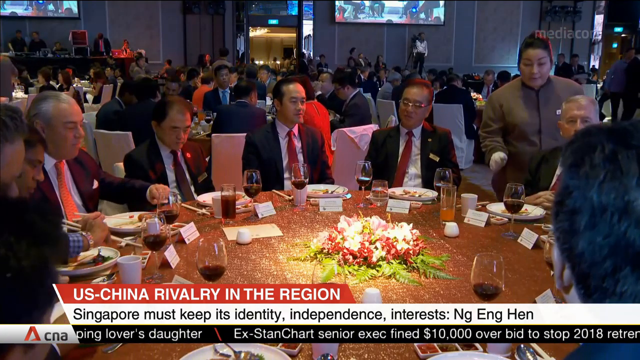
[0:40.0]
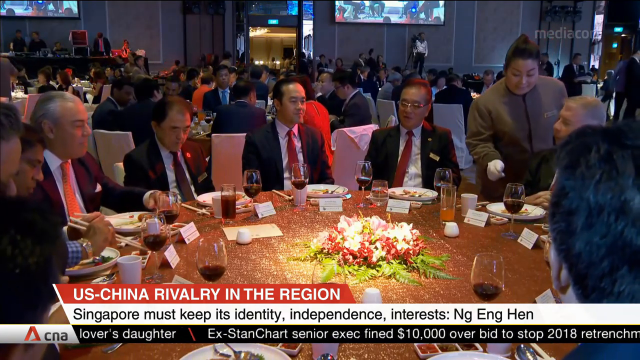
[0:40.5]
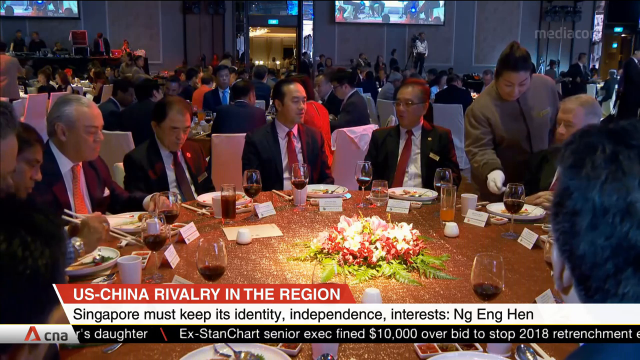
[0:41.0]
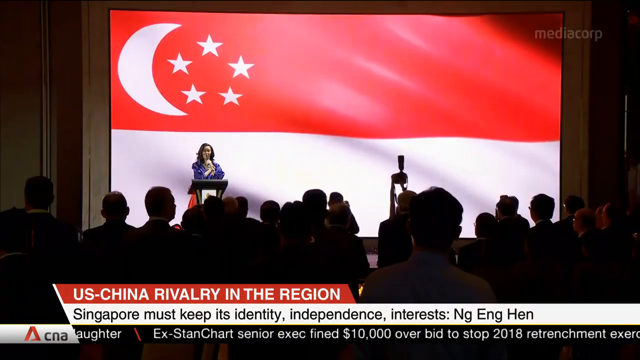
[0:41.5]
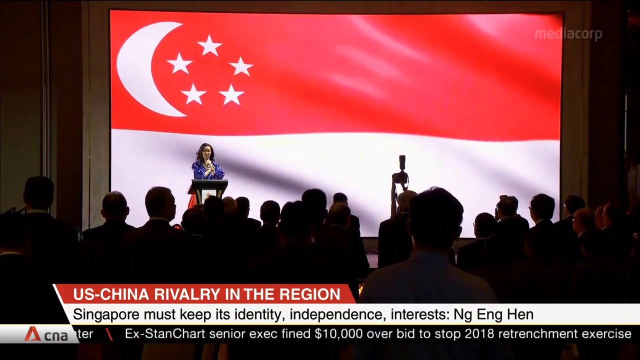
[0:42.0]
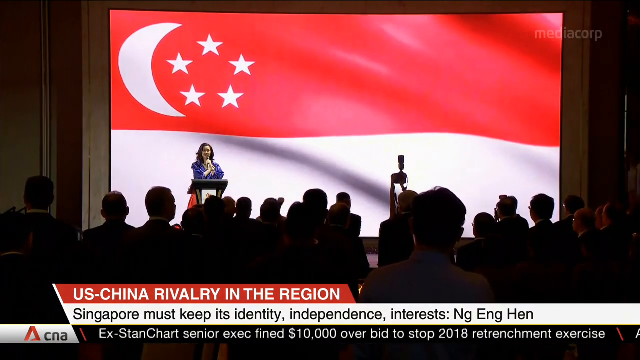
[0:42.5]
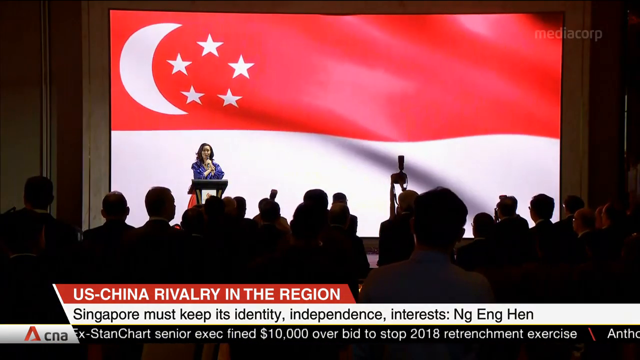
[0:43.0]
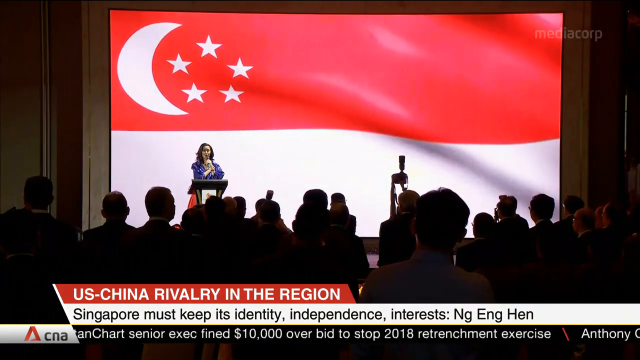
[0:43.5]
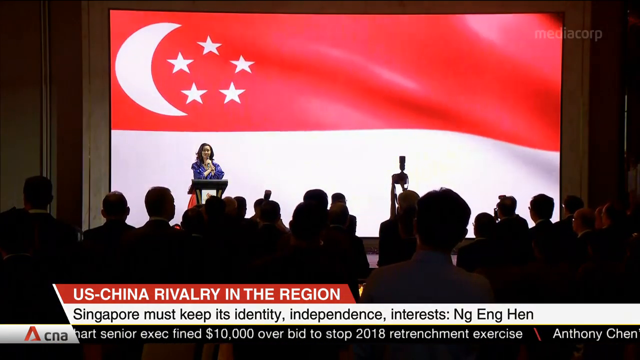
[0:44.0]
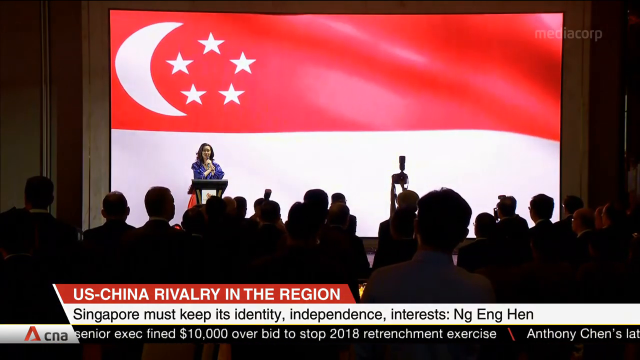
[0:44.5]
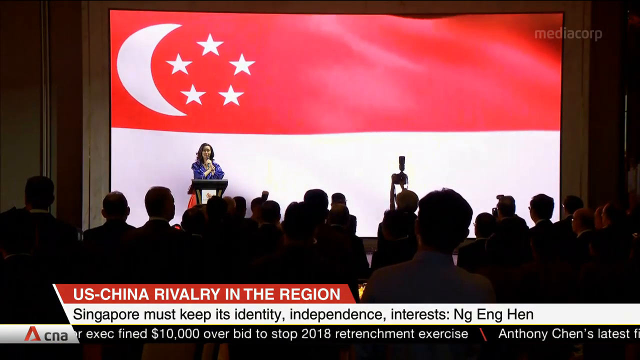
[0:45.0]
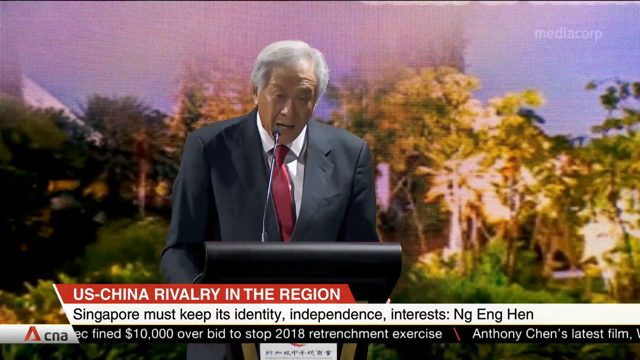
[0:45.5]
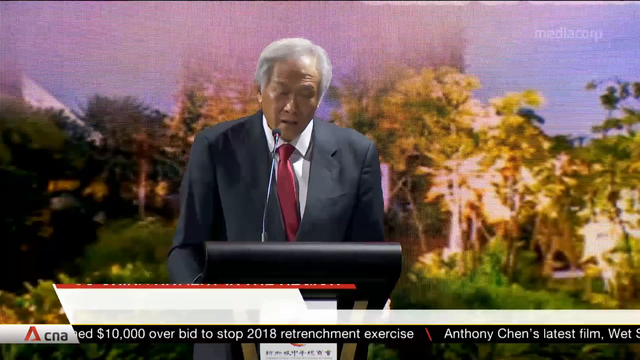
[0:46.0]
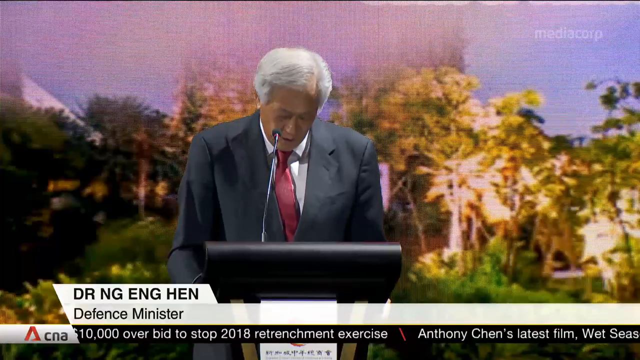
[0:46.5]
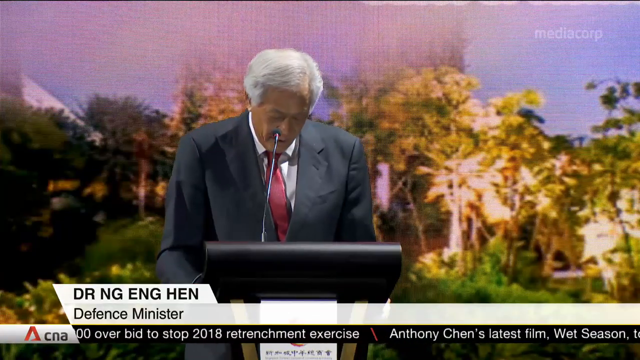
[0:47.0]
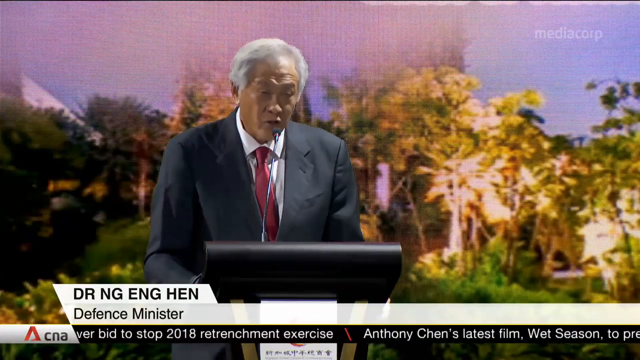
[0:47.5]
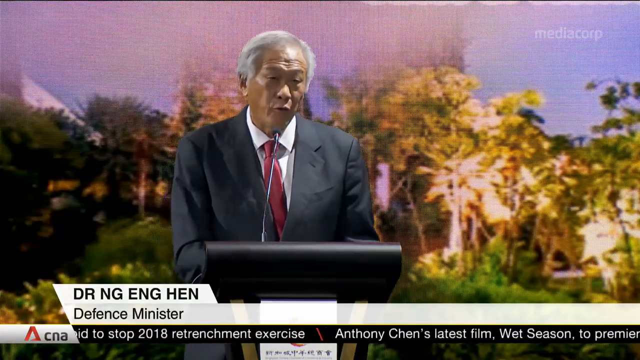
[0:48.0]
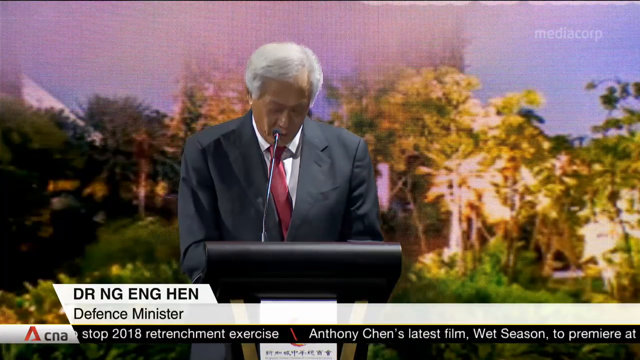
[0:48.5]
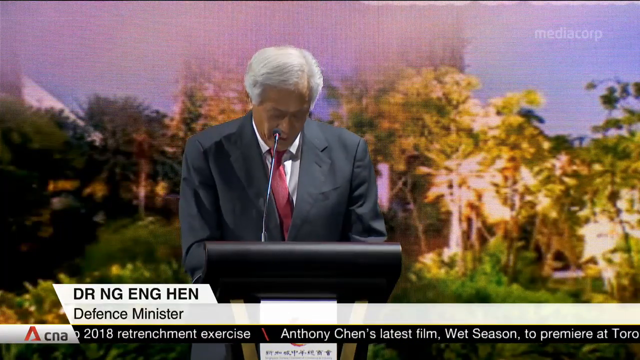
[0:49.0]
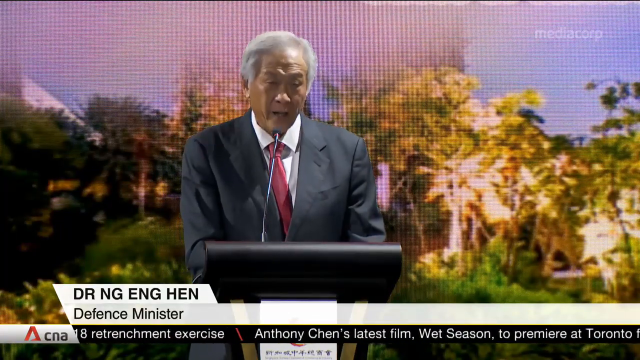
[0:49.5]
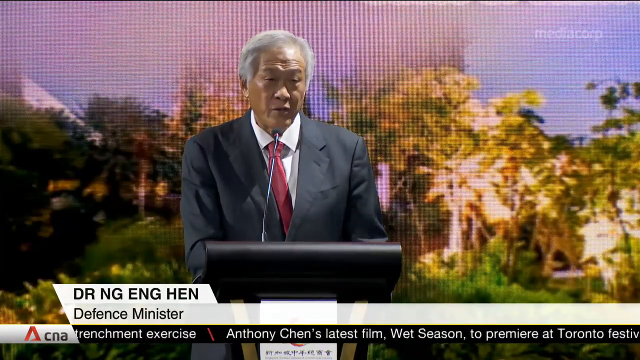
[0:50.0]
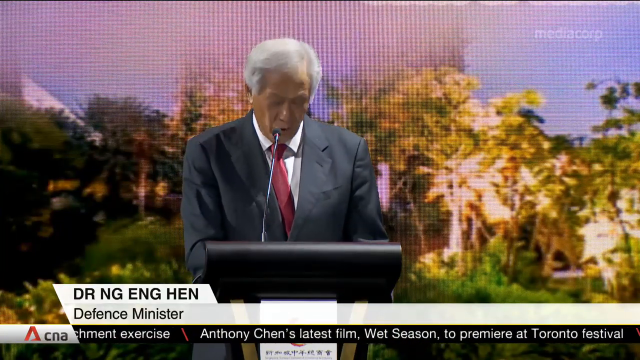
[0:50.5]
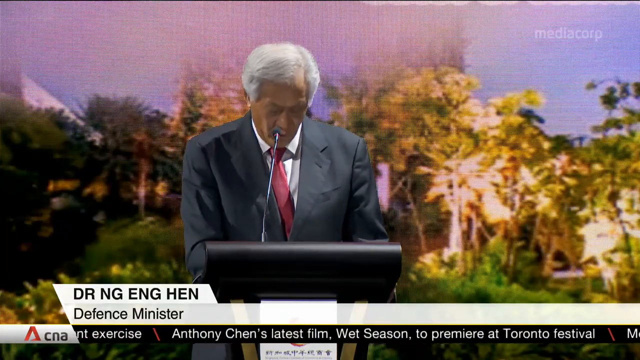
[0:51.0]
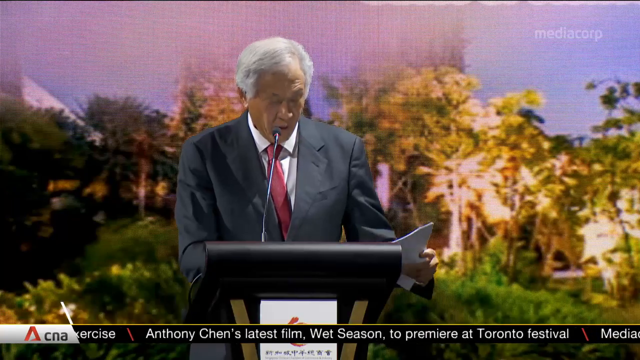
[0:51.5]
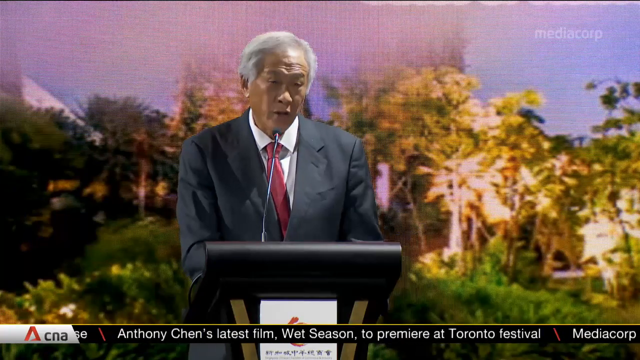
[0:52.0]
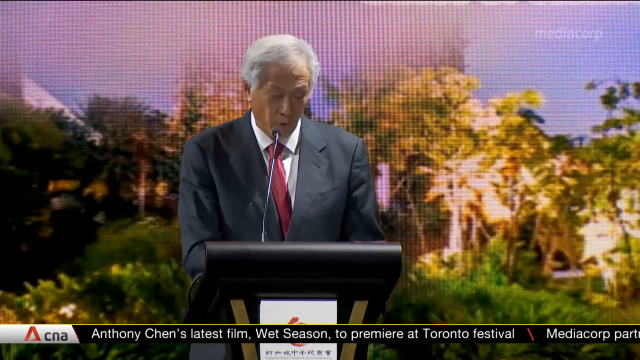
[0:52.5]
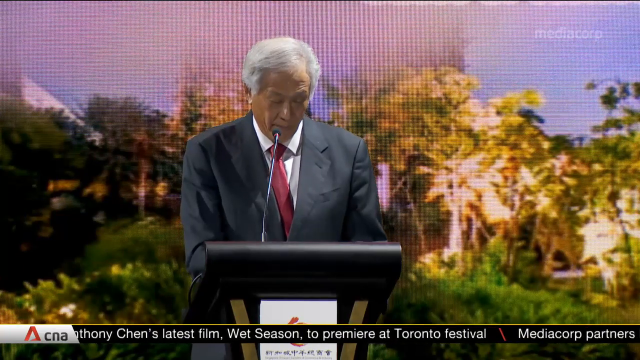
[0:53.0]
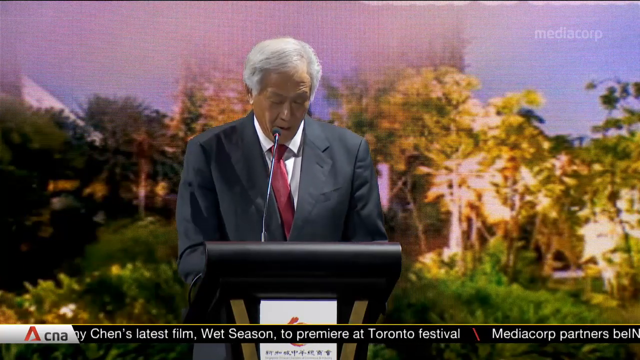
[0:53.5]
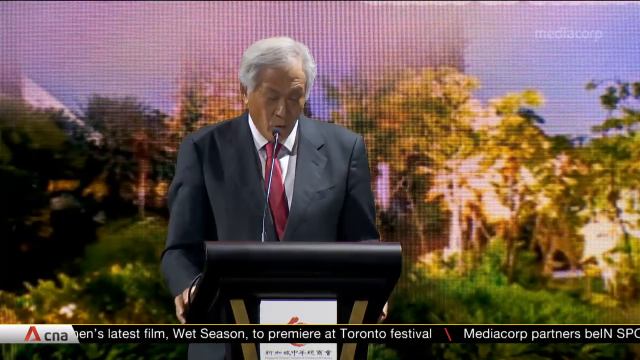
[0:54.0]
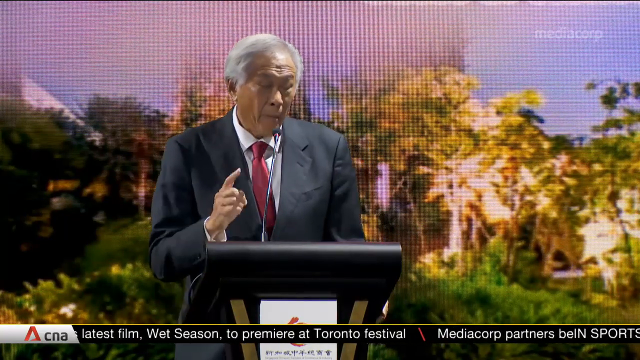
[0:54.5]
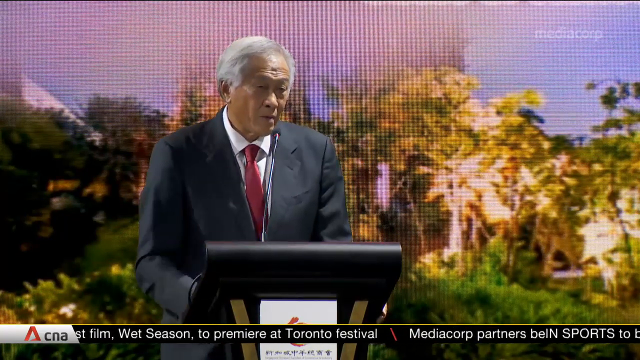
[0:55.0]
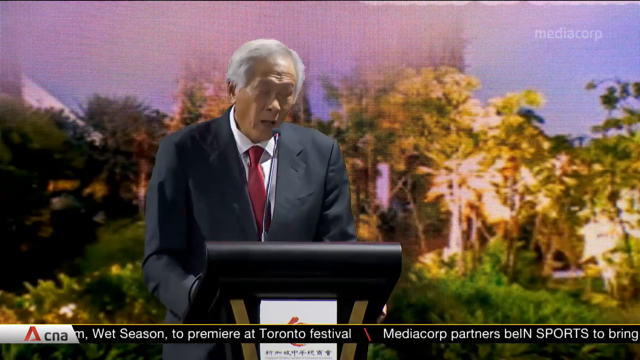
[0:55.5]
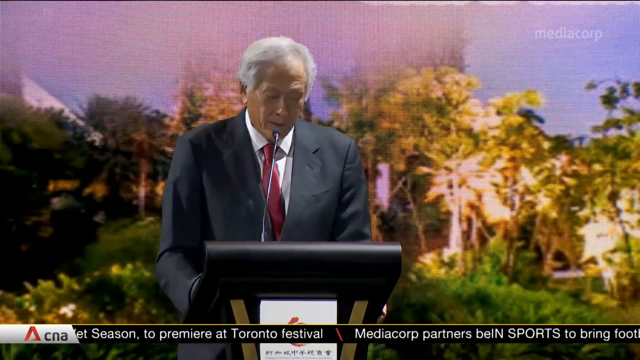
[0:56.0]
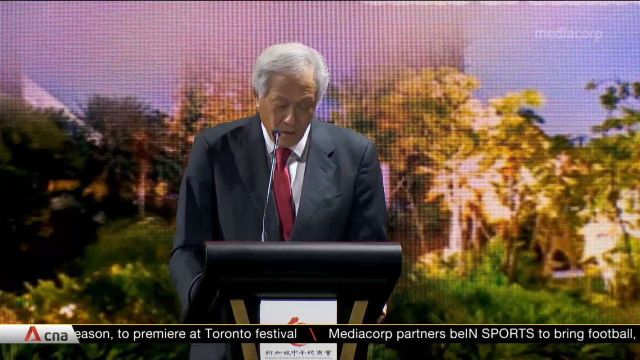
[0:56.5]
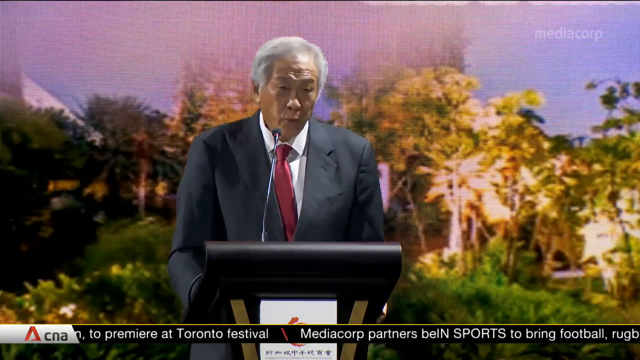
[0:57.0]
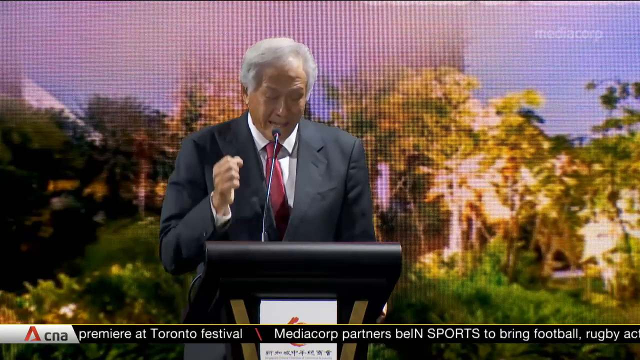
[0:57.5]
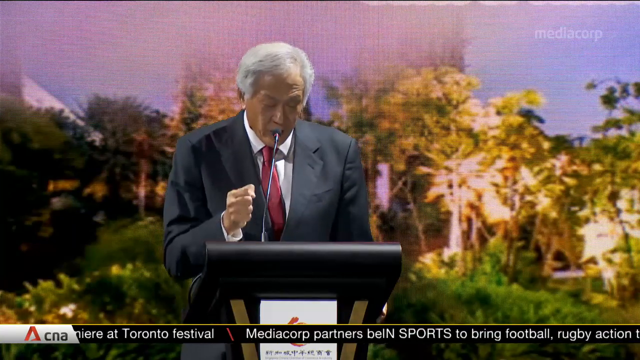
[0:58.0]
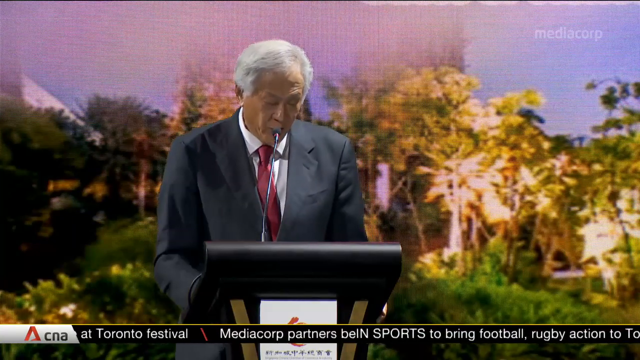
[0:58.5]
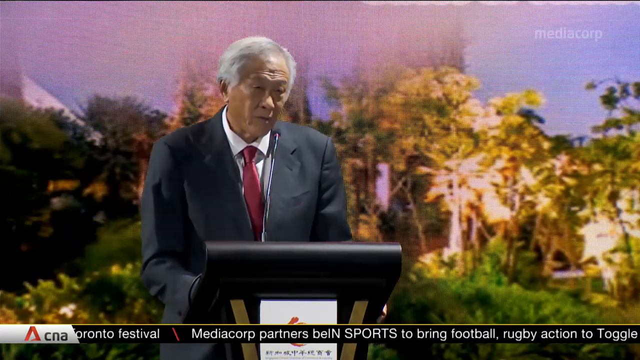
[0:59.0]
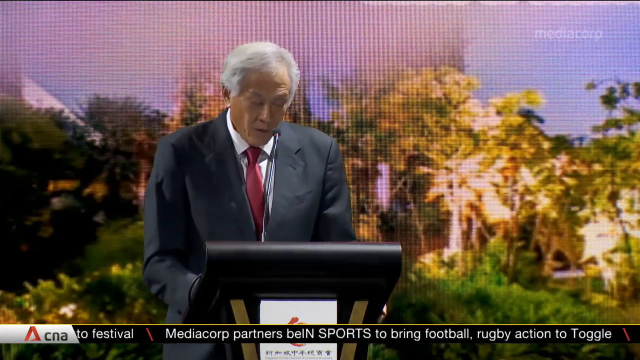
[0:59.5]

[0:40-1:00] A different speaker stands at the podium, a woman with long black hair wearing a blue top and a red skirt. The screen behind her is filled with an image of the Singapore flag: red on the top half and white on the bottom half, with a white crescent moon and five stars arranged in a circle next to it in the top left corner. The flag ripples as if in a breeze. The silhouettes of the backs of the heads of dozens of audience members sitting in their seats watching her are visible. The video cuts back to the male speaker, and the graphic strap animates into a white strap with black text identifying him as "Dr. Ng Eng Hen, Defence Minister". He speaks earnestly to the crowd, repeatedly looking down at his script and then up to meet the eye line of various people in the crowd. He sometimes points with his finger to emphasise a point, and at one point holds up a clenched fist.